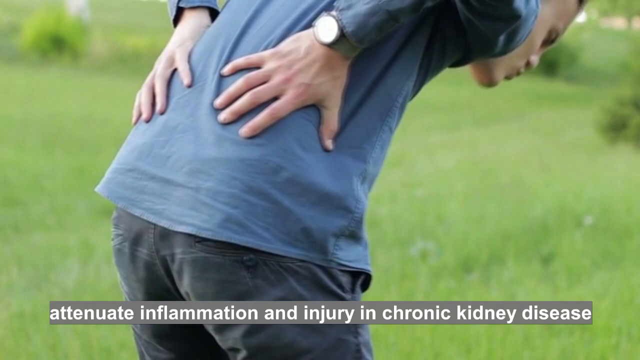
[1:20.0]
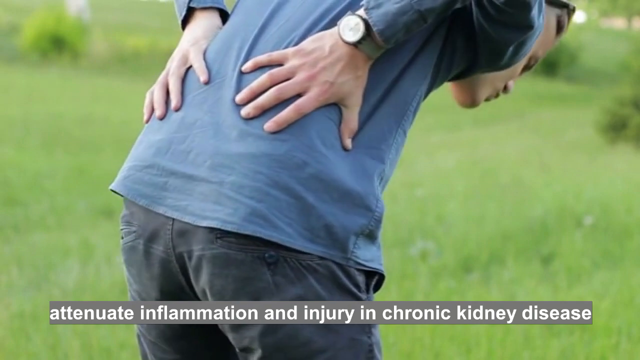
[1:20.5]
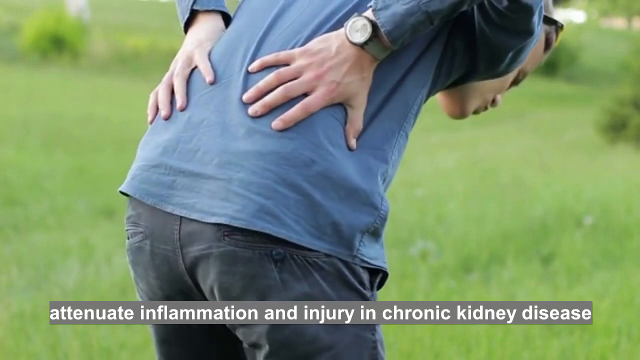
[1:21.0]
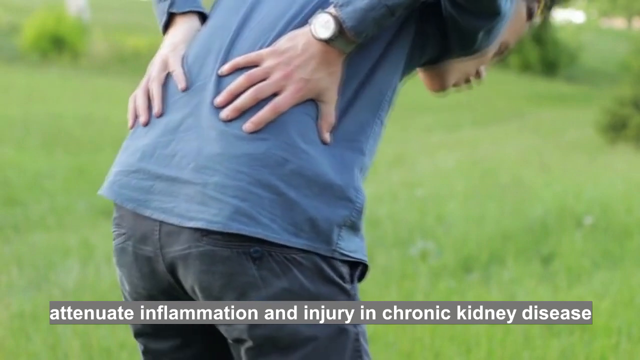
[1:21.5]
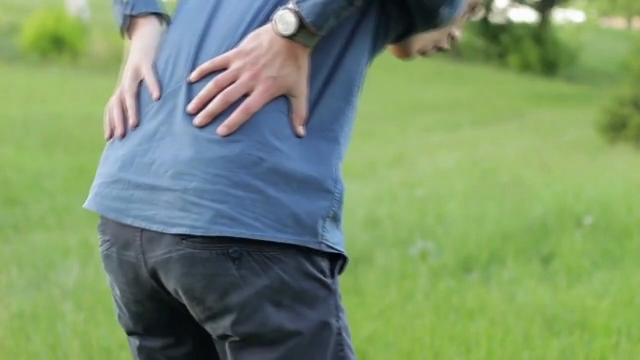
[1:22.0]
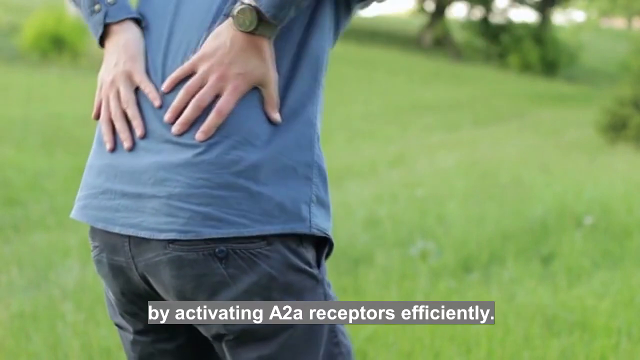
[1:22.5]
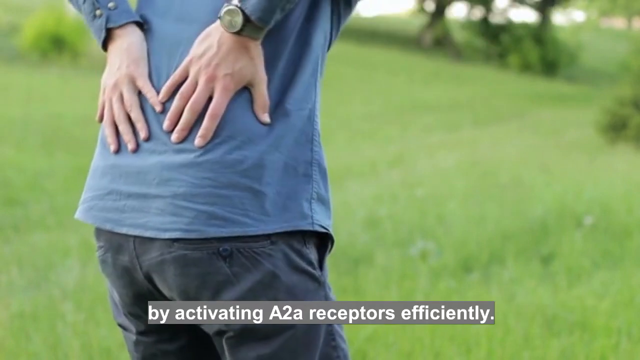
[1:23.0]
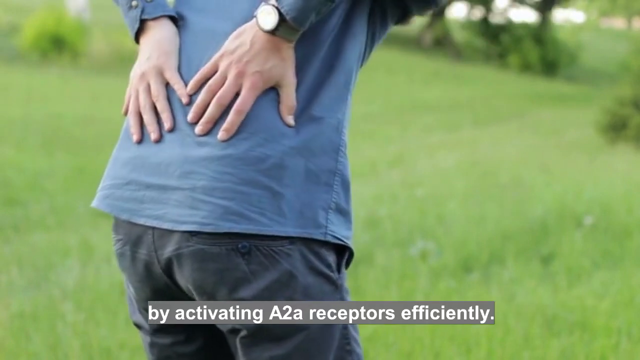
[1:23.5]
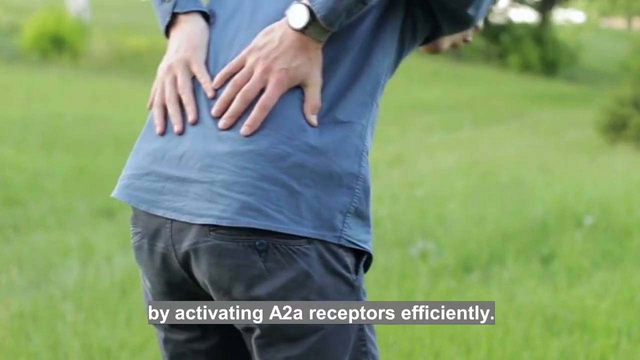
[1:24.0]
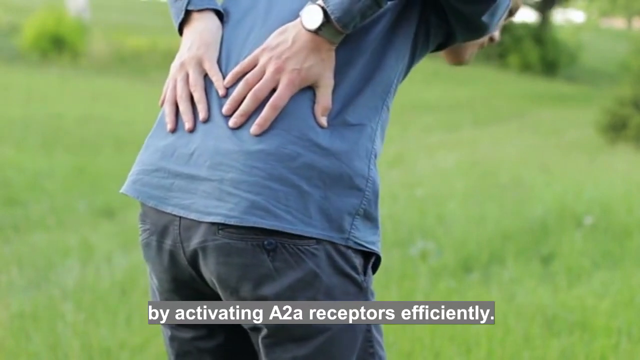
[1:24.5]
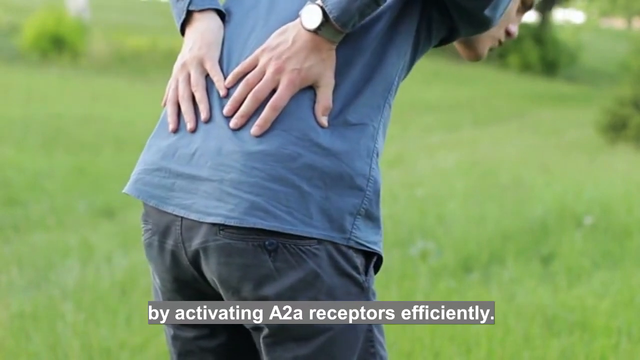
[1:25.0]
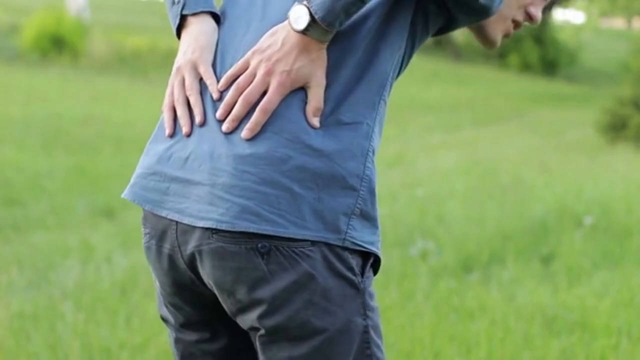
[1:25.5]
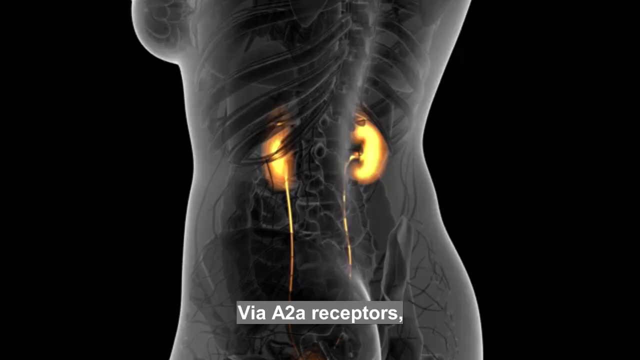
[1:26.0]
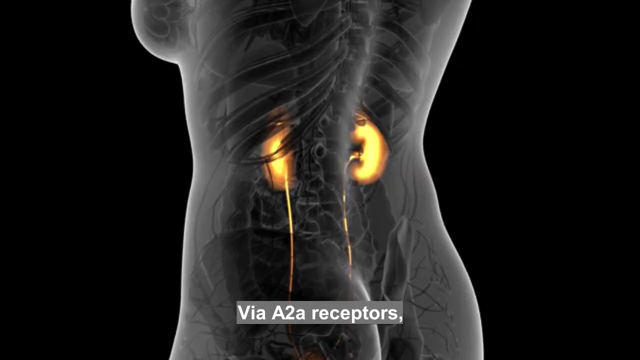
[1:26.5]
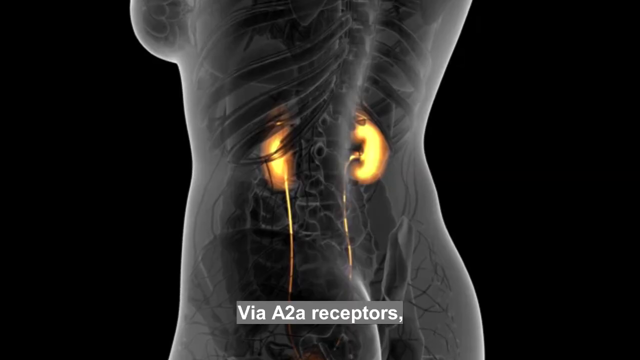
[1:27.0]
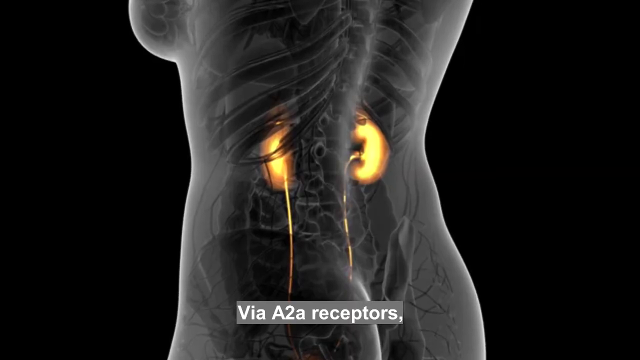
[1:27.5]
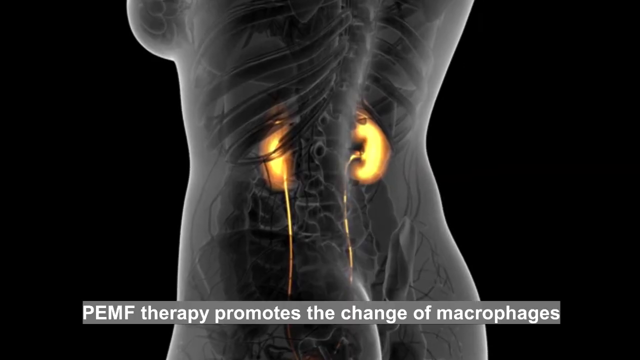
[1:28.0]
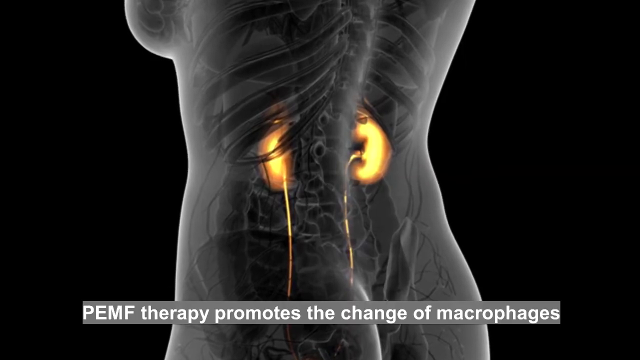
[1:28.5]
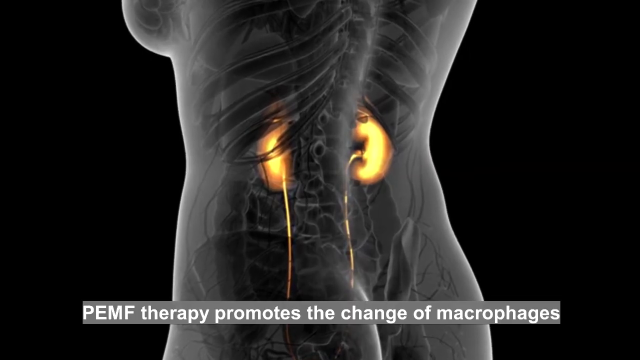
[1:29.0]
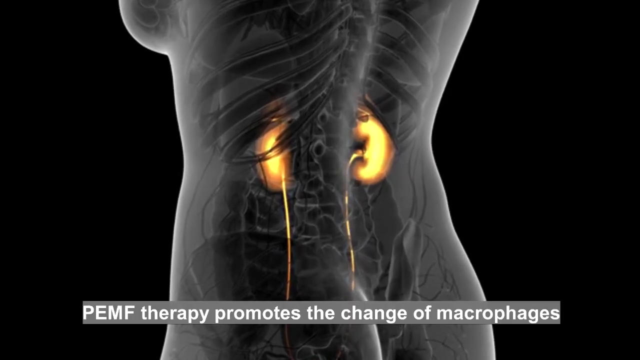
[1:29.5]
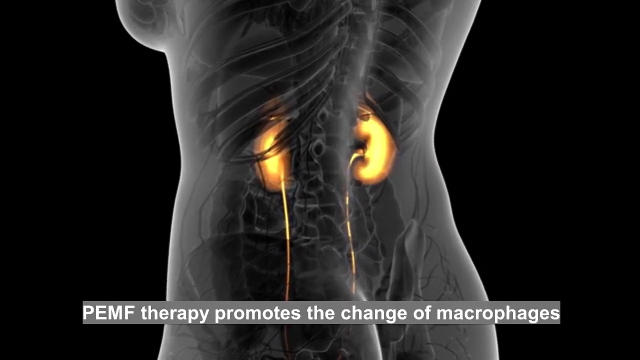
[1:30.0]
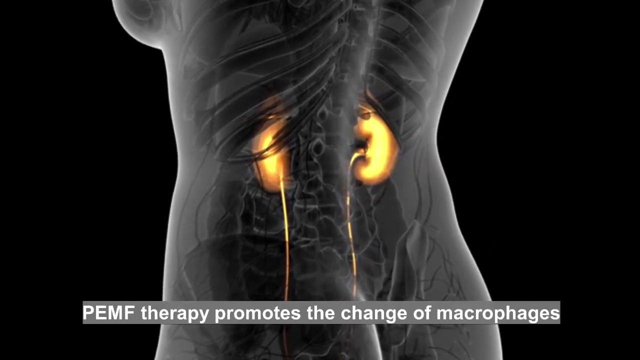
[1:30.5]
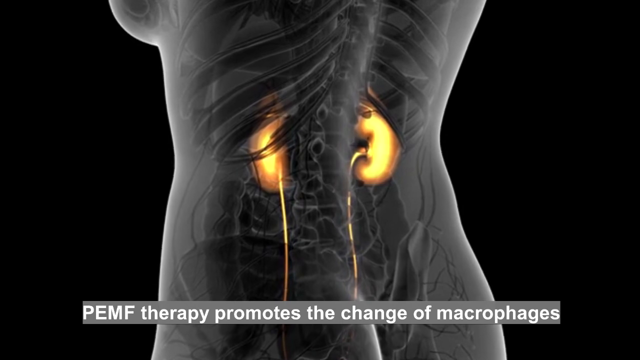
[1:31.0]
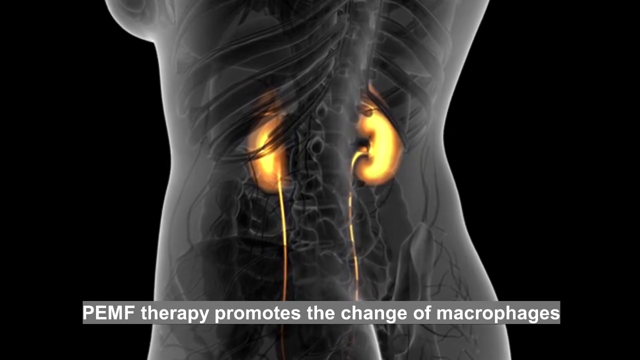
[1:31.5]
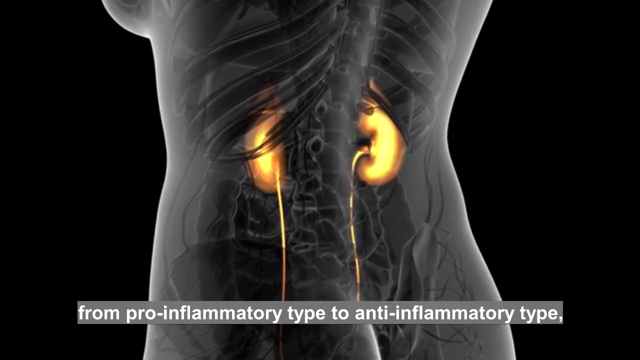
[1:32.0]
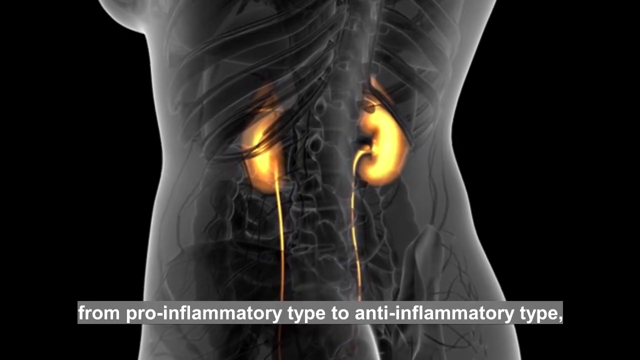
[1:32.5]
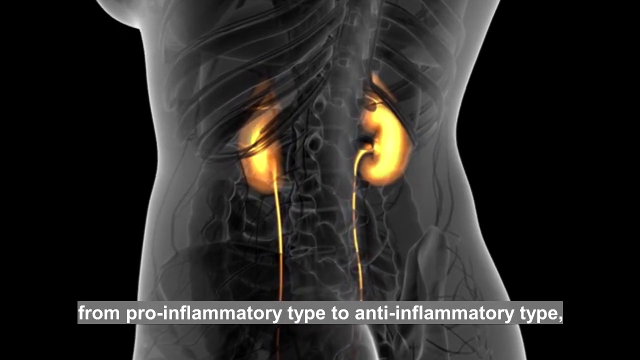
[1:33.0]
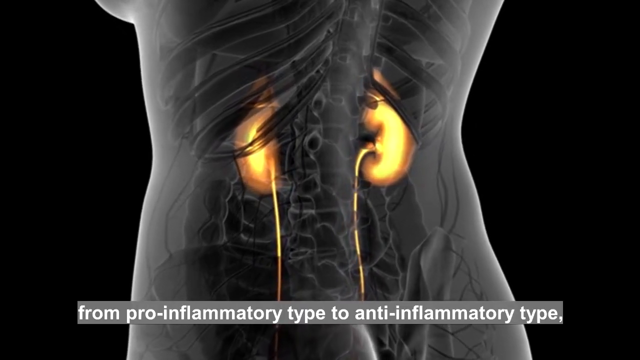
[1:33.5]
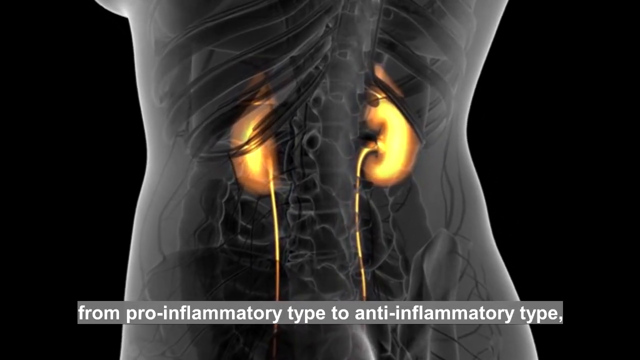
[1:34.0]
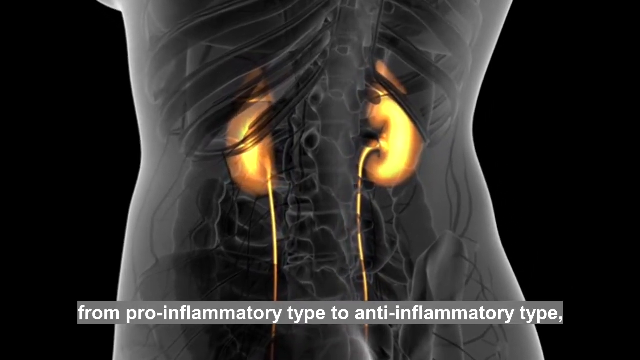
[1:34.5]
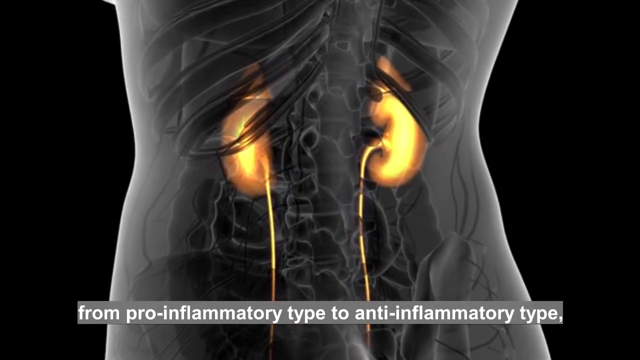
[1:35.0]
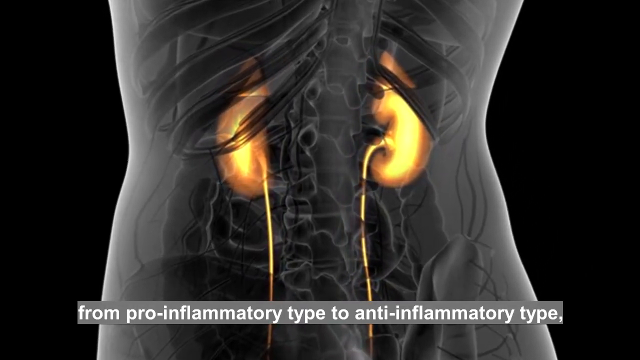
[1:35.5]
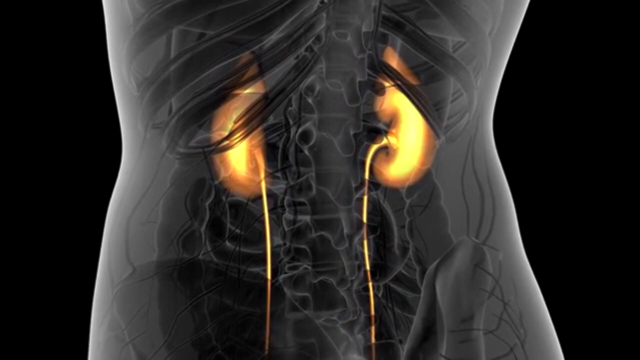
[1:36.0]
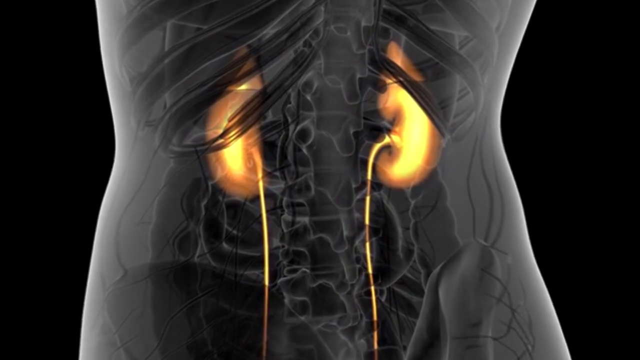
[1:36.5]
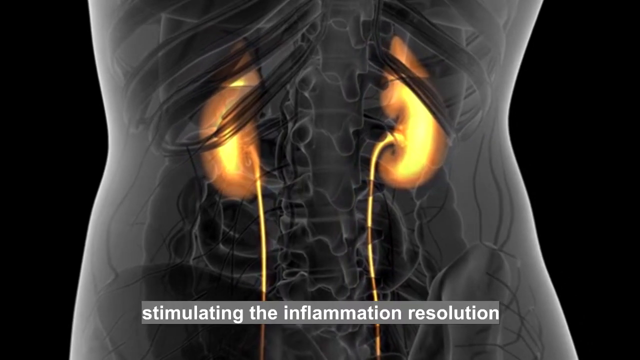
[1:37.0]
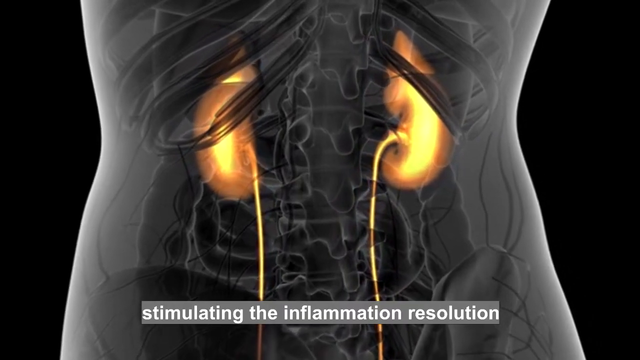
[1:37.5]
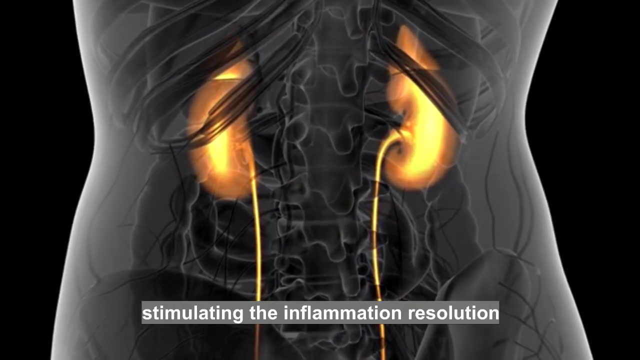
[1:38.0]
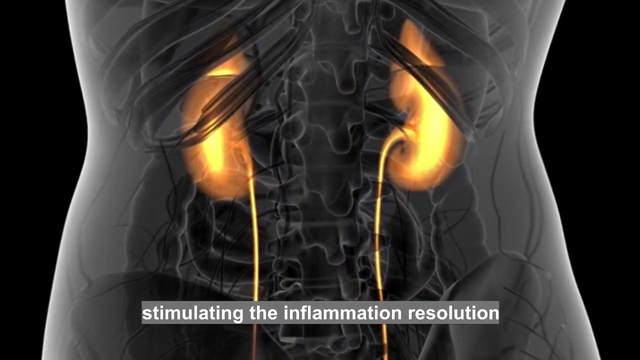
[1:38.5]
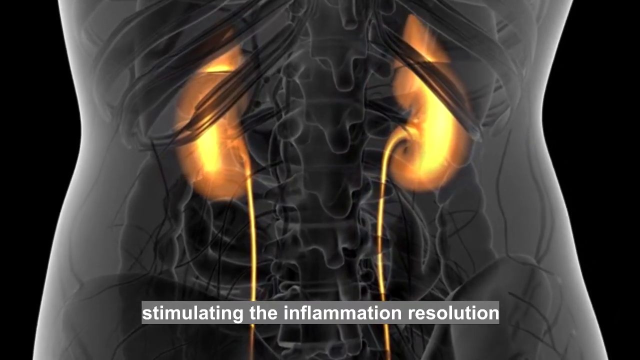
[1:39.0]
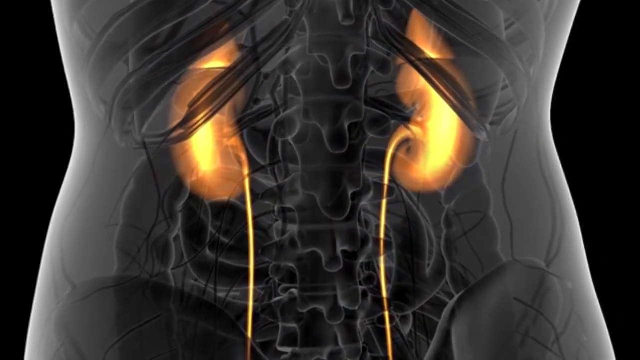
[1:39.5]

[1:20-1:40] The person outside is bending down, grabbing their back around where the kidney would be, with text at the bottom reading "inflammation and injury and chronic kidney disease." The person says "this is by activating A2A receptors efficiently." The video cuts to another CGI body with the kidneys glowing inside it and the text "via A2A receptors." The view is zoomed in on the body, and text apparently reads "PEMF therapy promotes the change of micropathogens from pro-inflammation type to anti-inflammation type," followed by text apparently mentioning "inflammation resolution" and "tissue restoration of damaged kidneys". The view slowly zooms in on the kidneys in the CGI body.